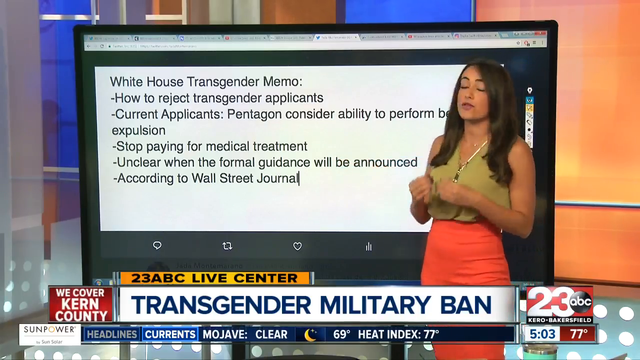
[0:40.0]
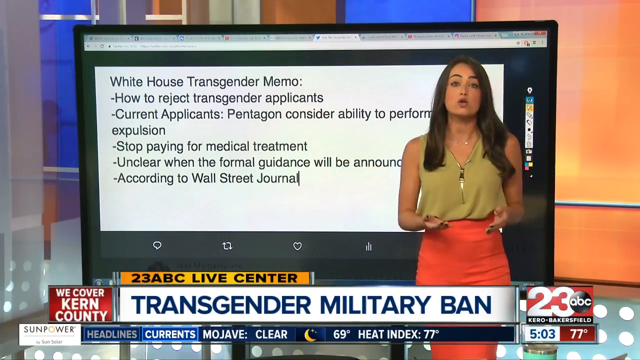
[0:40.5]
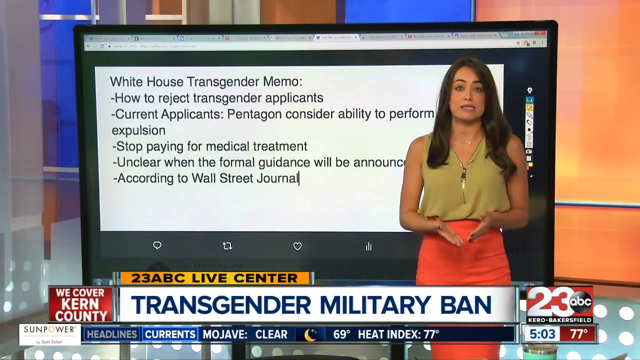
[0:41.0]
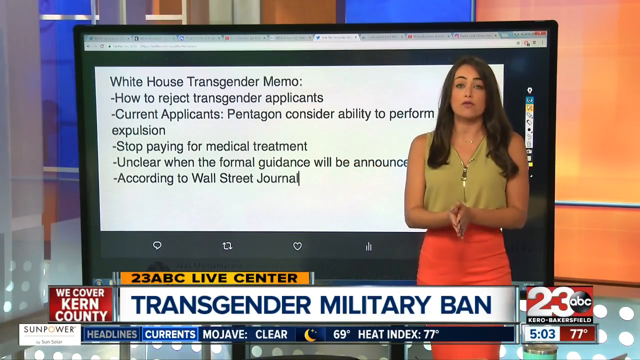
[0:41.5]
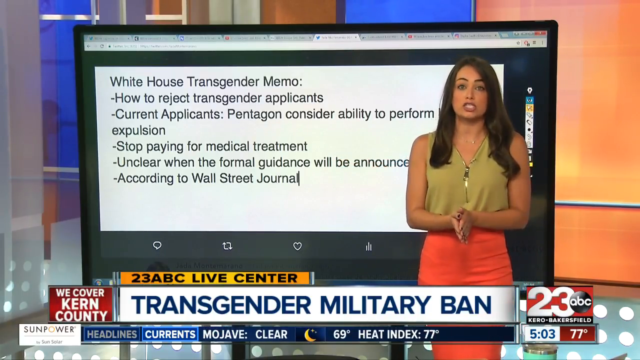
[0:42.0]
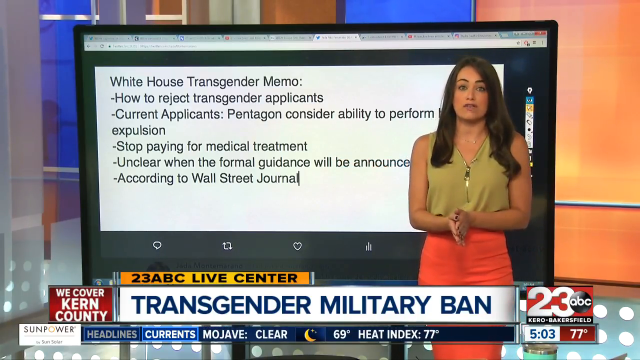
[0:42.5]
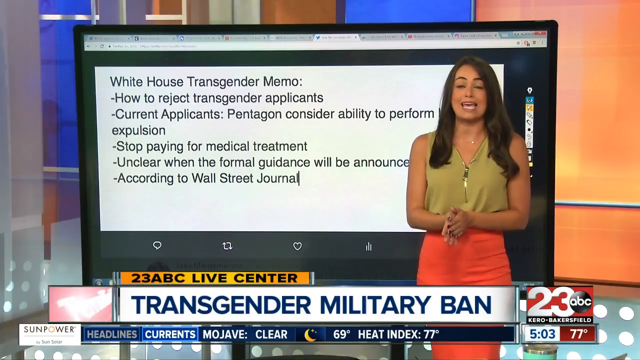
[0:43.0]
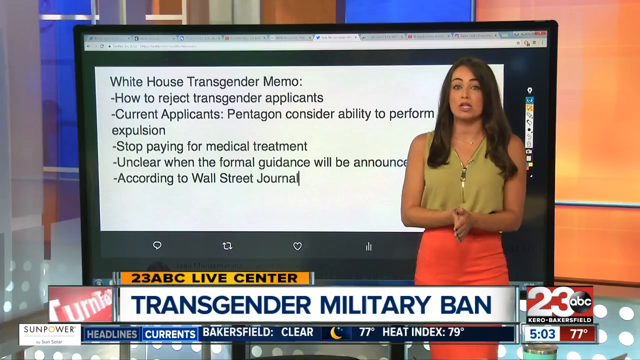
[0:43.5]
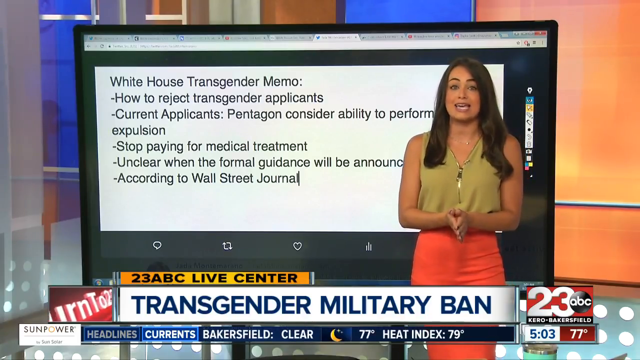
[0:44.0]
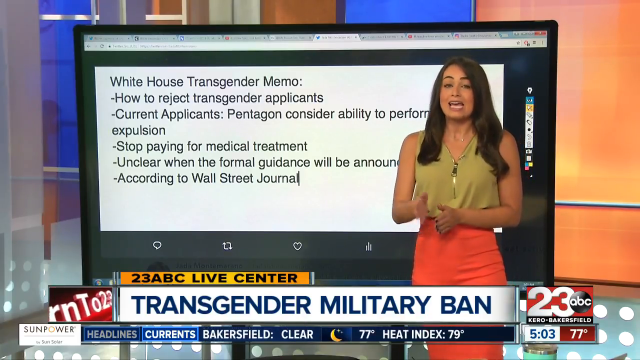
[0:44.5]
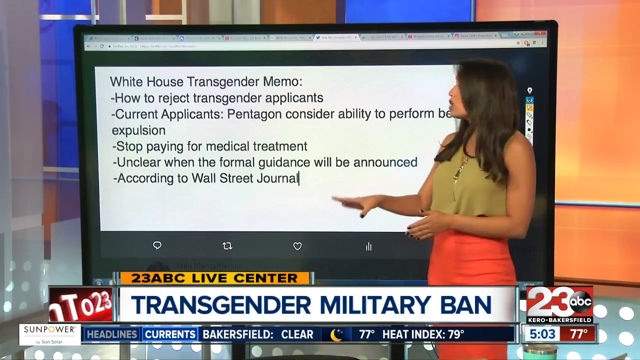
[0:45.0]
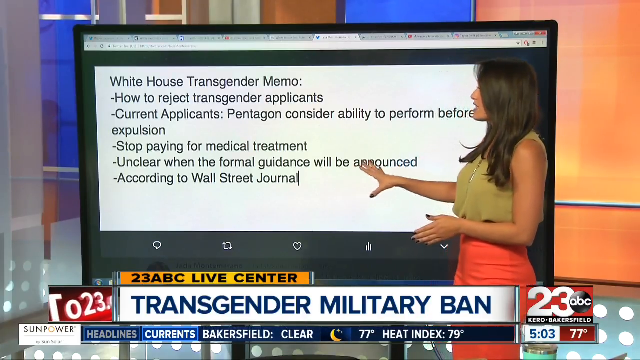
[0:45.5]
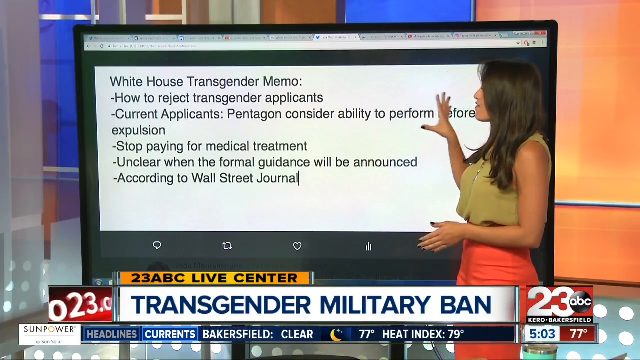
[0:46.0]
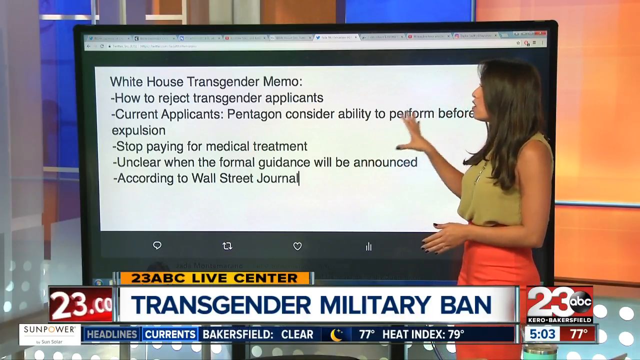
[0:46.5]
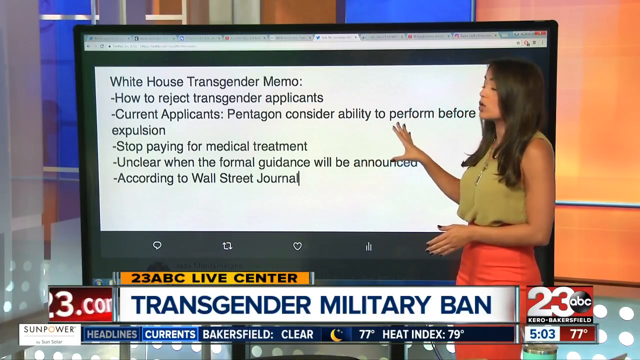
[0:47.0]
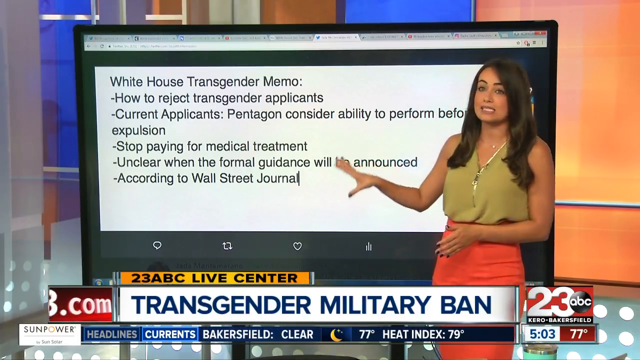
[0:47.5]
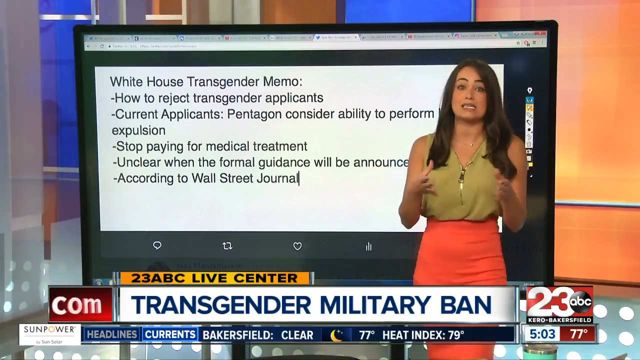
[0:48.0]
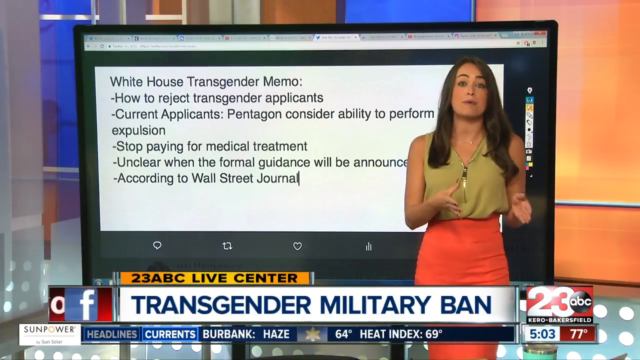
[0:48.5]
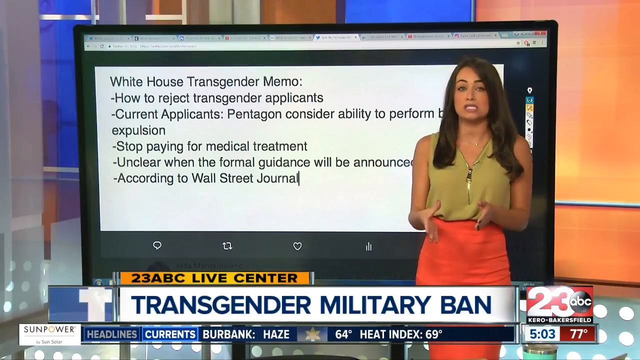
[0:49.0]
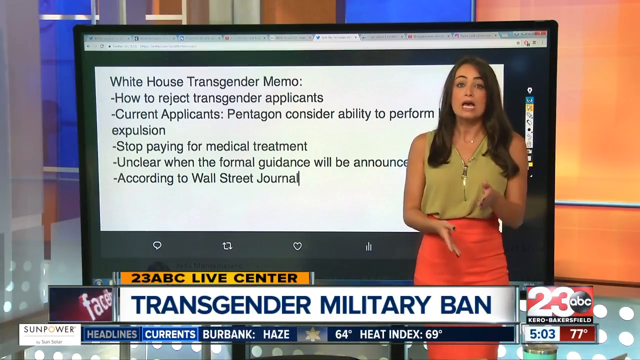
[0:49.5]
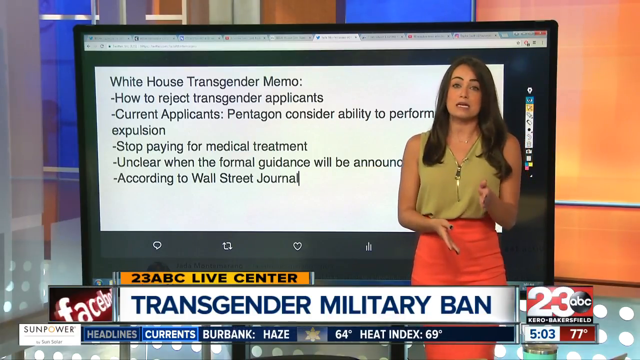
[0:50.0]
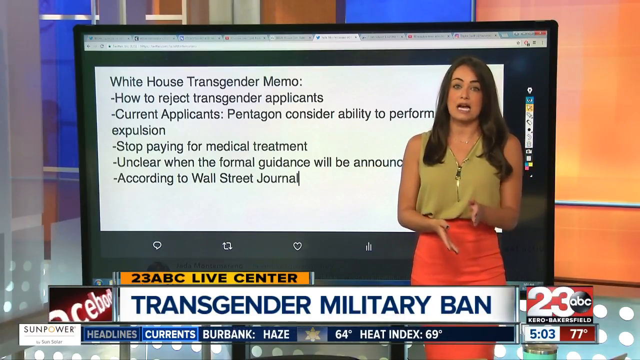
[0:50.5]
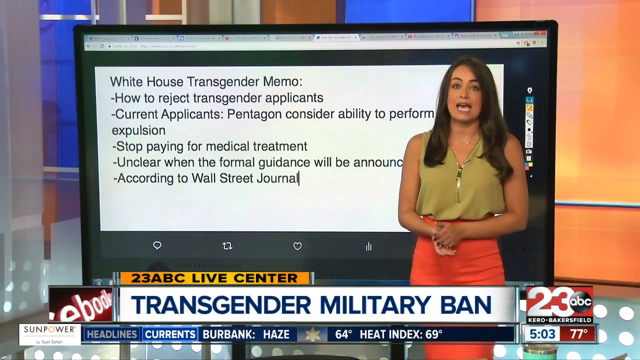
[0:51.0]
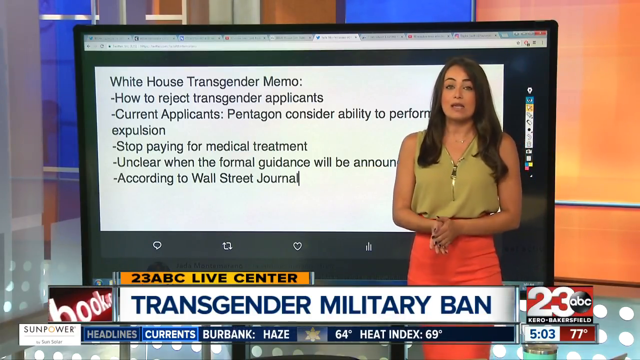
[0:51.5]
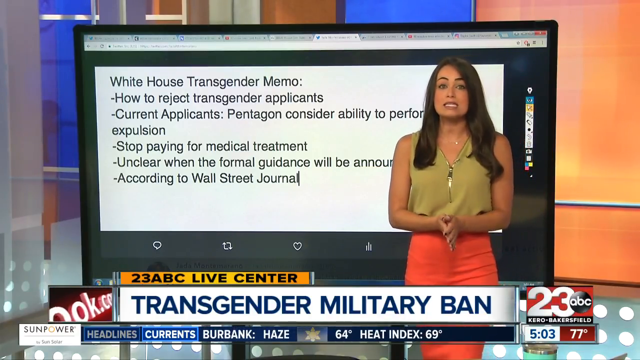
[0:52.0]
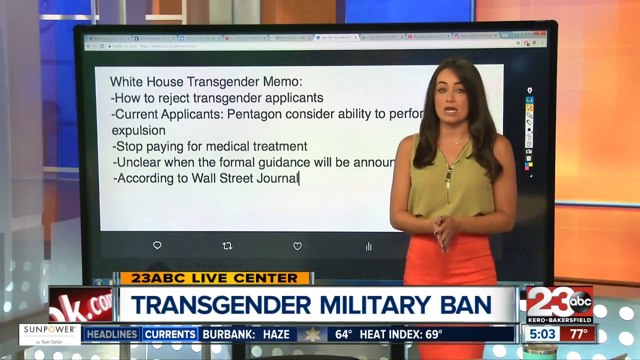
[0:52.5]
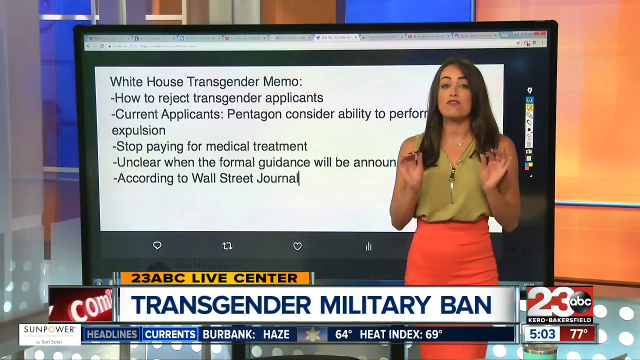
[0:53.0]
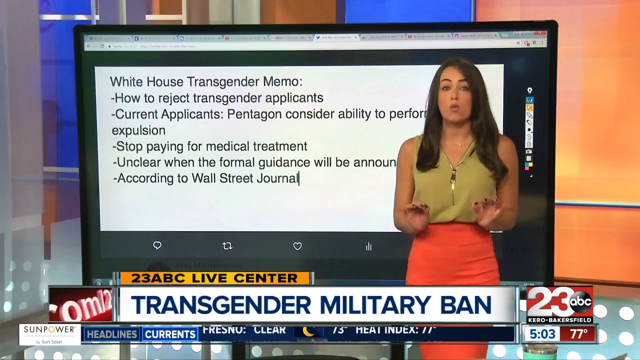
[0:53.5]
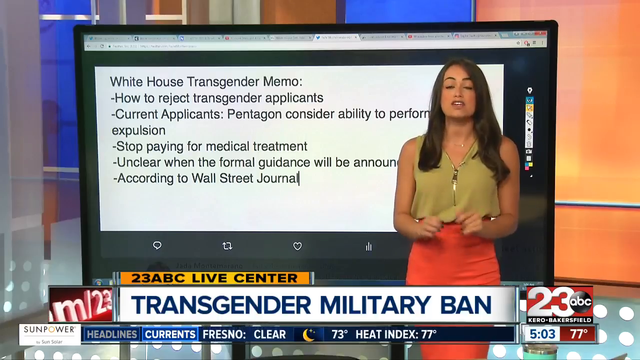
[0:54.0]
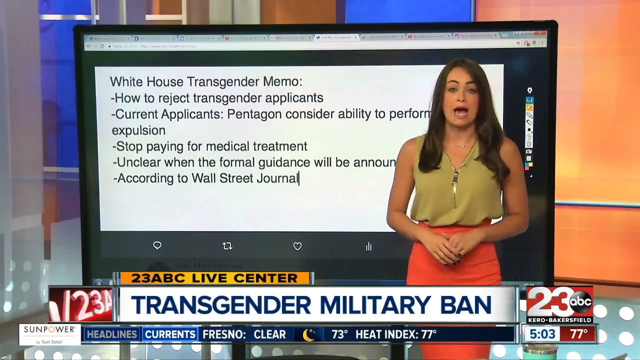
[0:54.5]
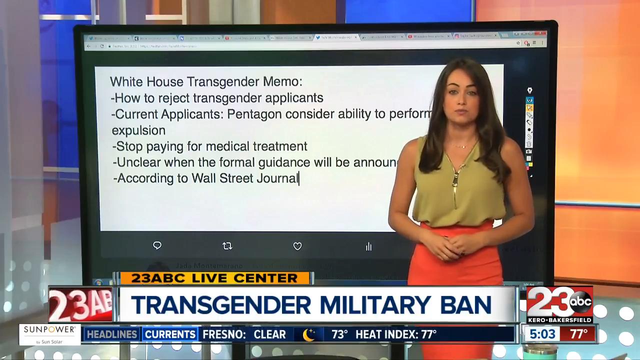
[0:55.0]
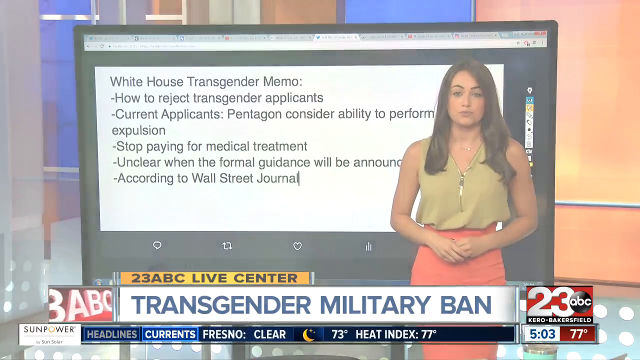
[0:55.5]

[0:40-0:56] Jada continues explaining the transgender military ban in the United States, with the report citing the Wall Street Journal and stating that it is unclear when the formal guidance will be announced.